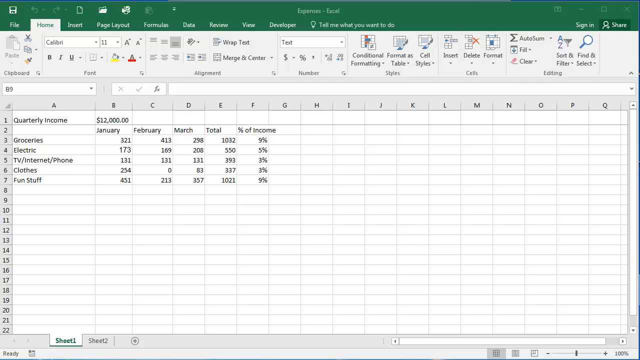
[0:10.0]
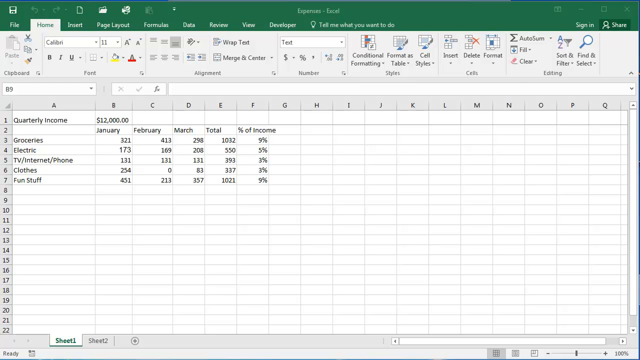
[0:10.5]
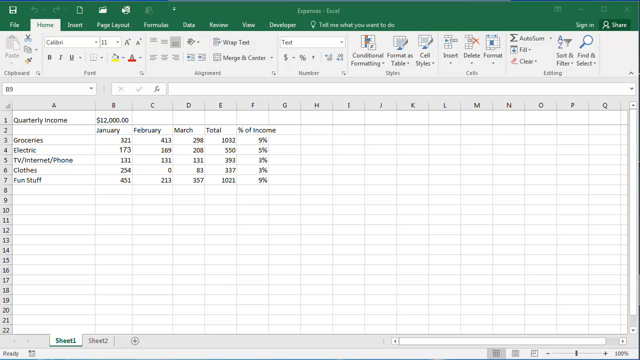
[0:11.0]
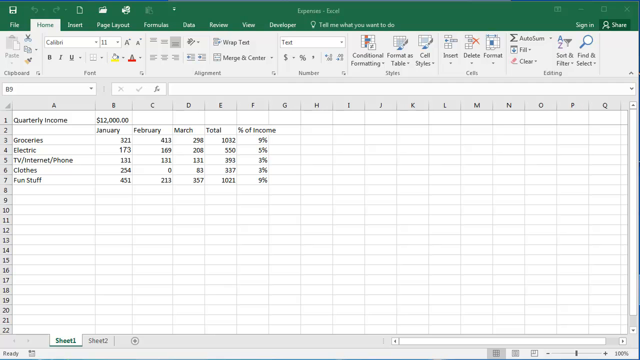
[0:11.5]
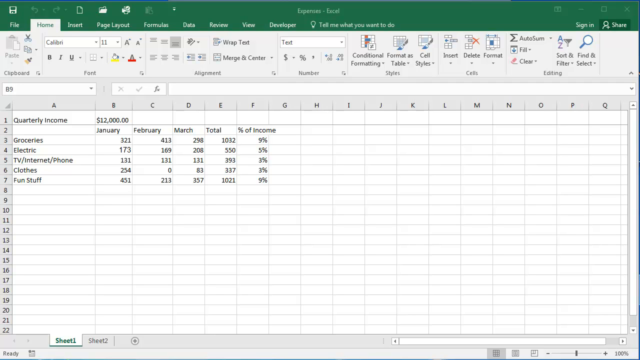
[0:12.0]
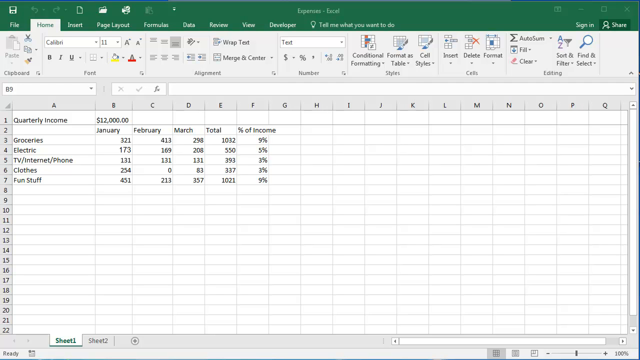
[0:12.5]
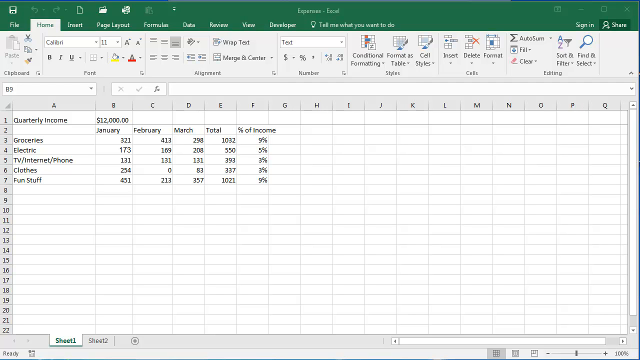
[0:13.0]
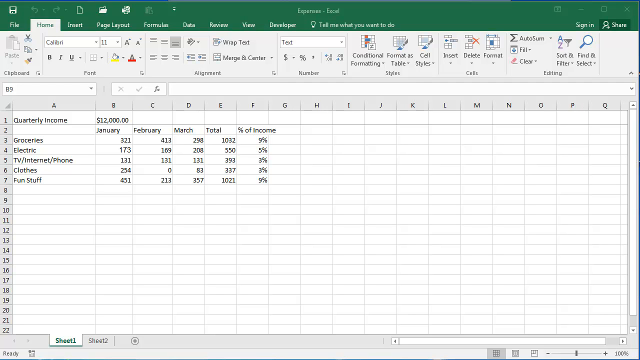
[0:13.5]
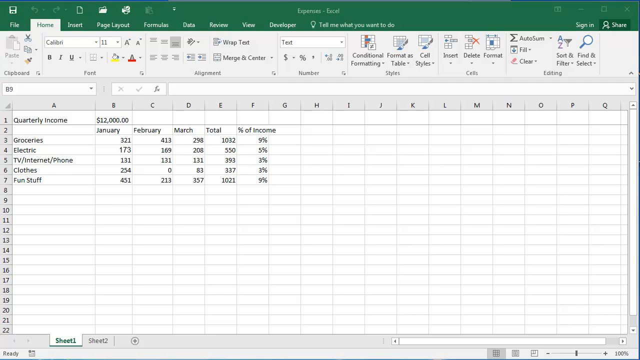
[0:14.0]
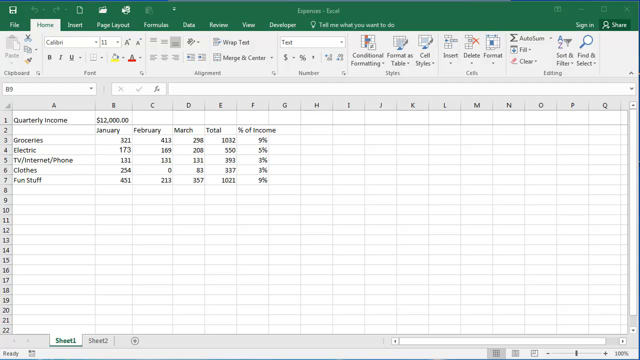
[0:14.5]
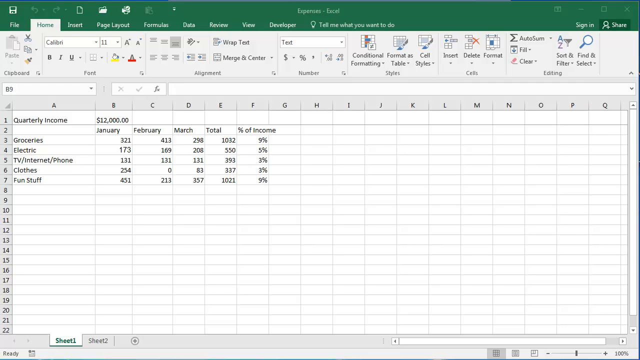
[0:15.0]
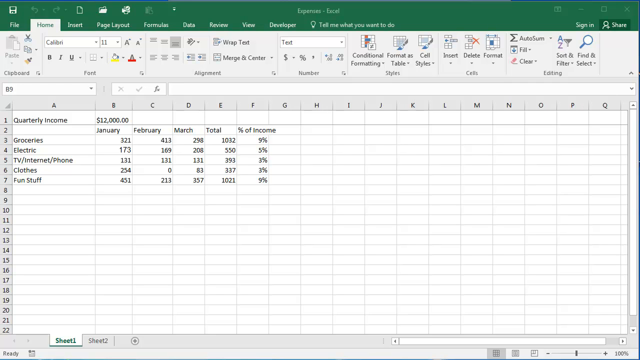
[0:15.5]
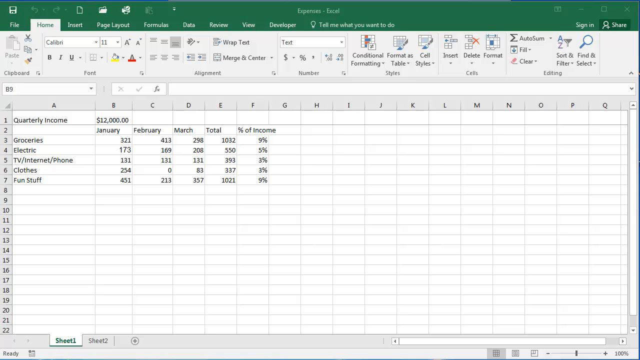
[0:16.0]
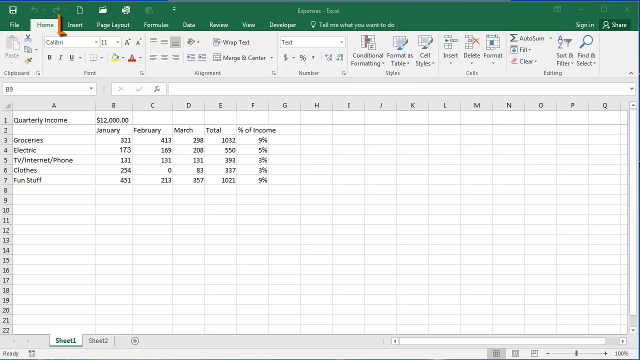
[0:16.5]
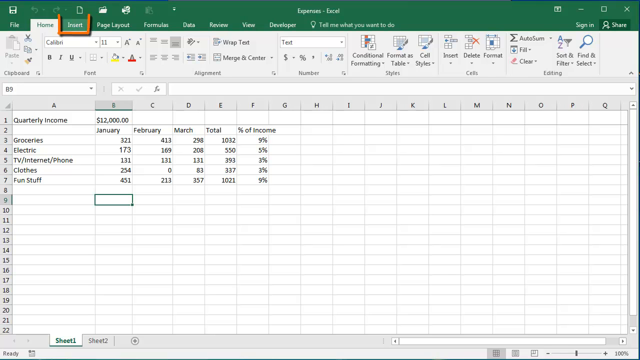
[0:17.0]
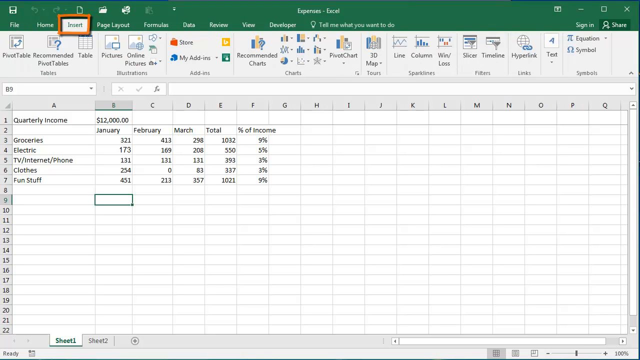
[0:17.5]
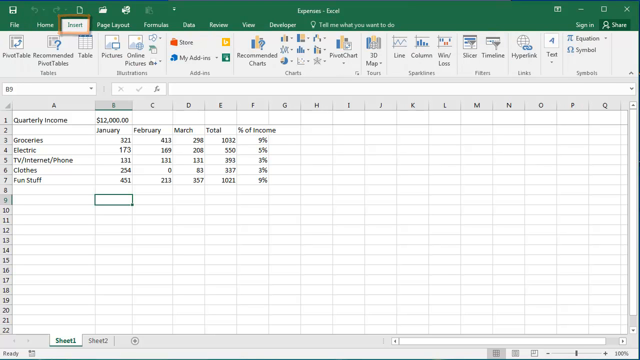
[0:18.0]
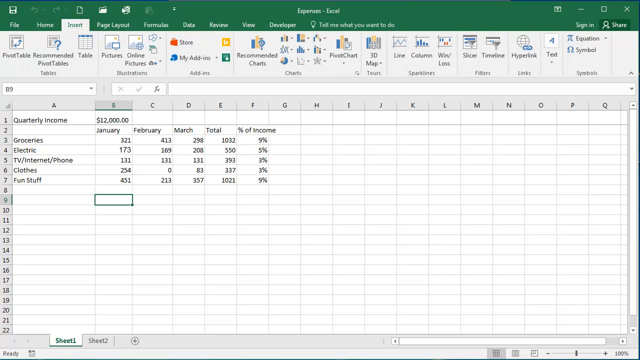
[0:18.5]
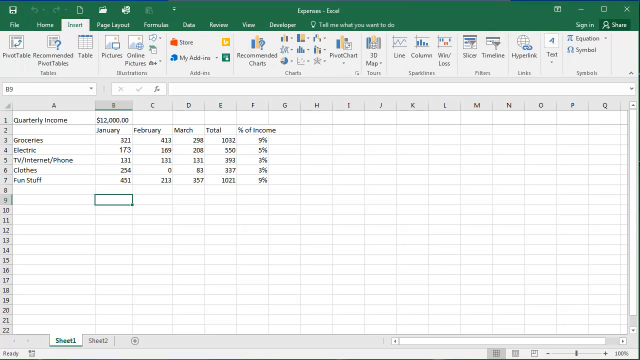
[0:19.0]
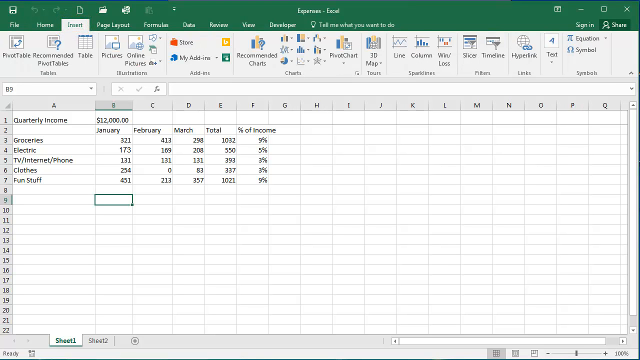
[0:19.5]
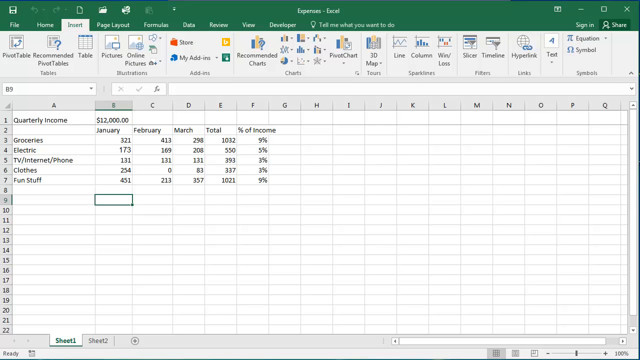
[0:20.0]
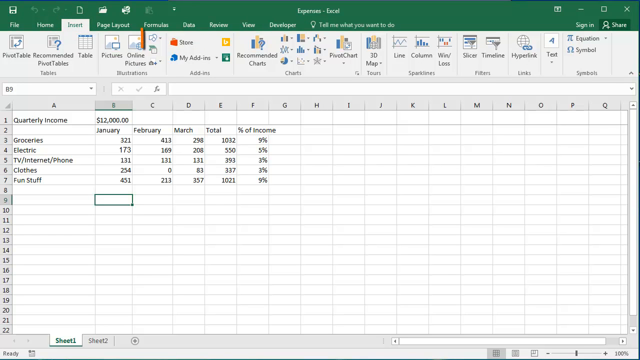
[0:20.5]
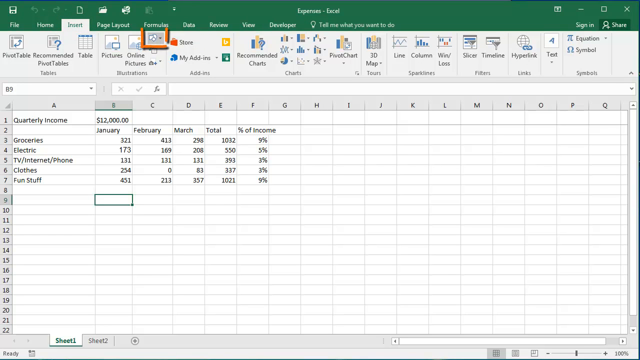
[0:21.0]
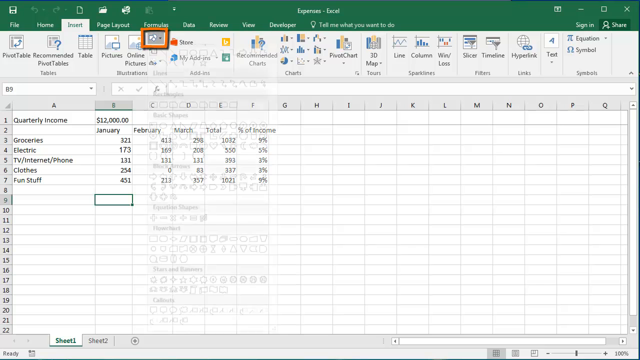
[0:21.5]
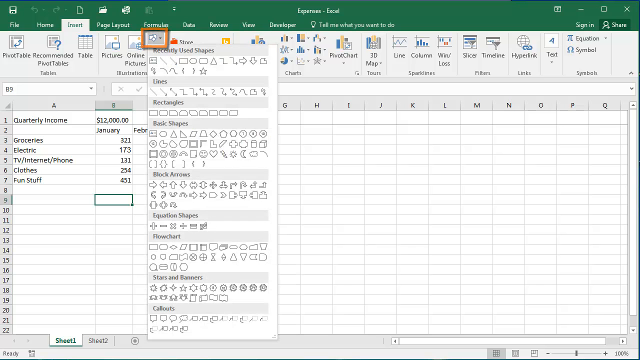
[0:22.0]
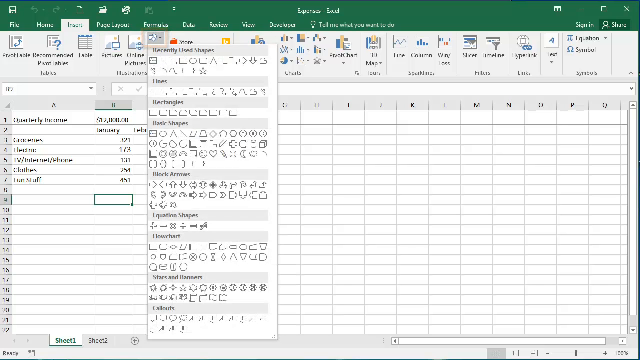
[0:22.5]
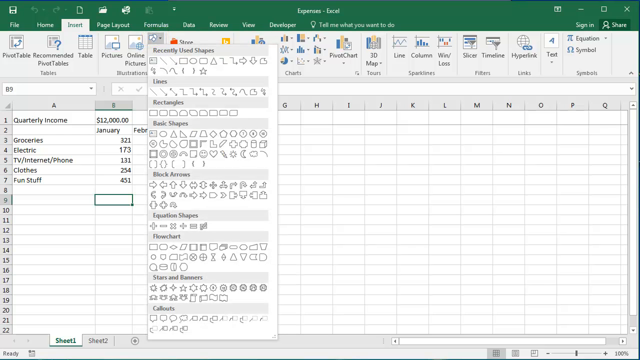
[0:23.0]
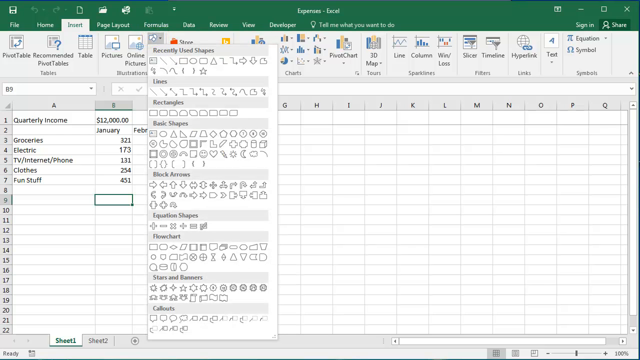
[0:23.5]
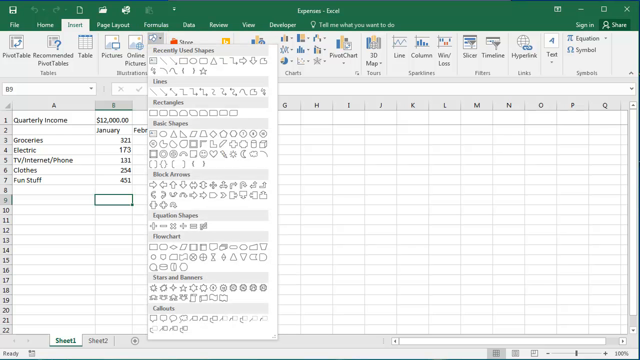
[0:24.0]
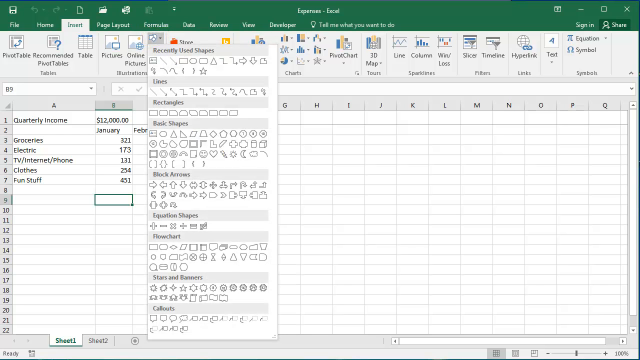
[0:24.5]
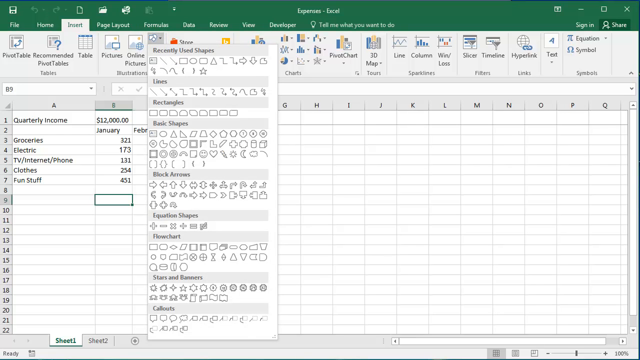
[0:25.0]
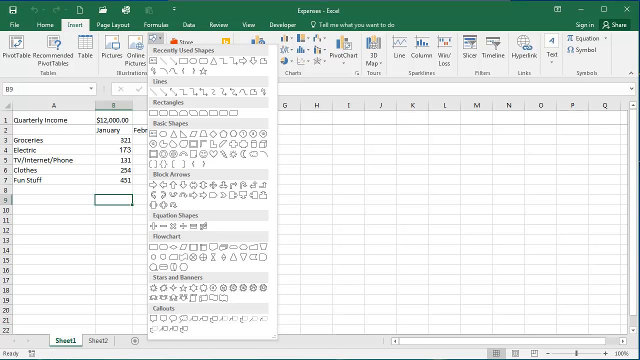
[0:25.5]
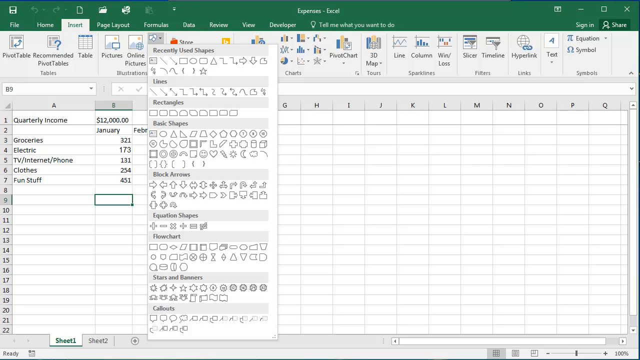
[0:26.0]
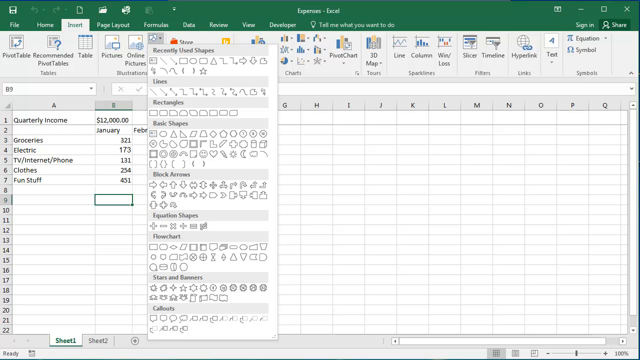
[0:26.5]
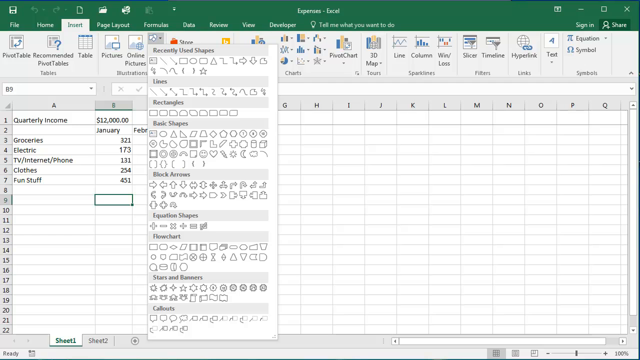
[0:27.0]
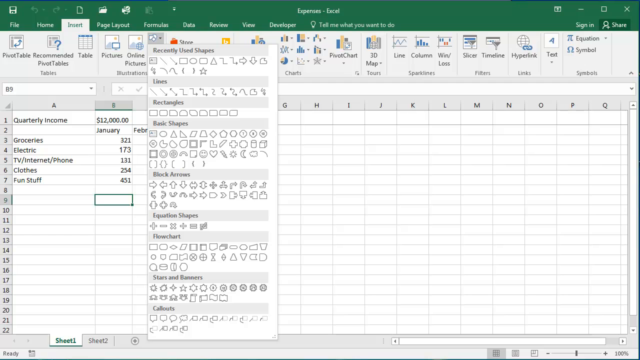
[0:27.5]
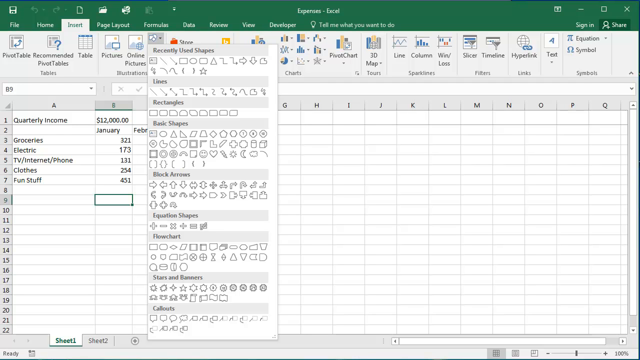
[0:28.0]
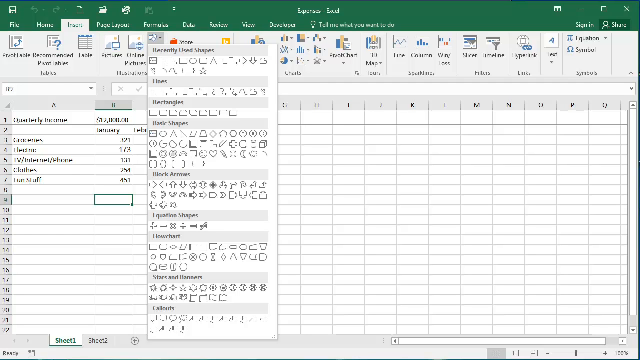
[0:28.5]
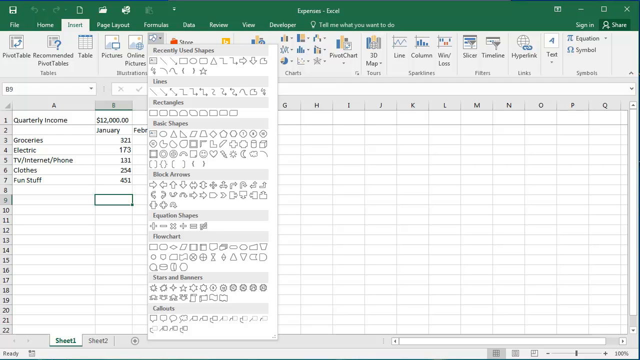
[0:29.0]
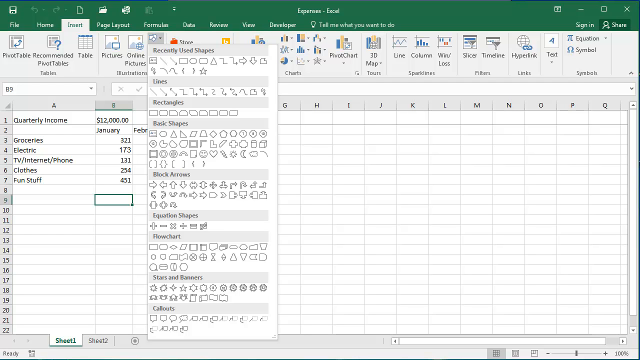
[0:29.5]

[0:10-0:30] An Excel spreadsheet has a green bar across the top with the menu items File, Home, Insert, Page Layout, Formula, Data, Review, View, Developer and Tell Me What You Want to Do. The Home tab is highlighted. Columns A through F are filled in. Column A has "quarterly income" in row 1, then "groceries" in row 3, "electric" in row 4, "TV, Internet, and phone" in row 5, "clothes" in row 6 and "fun stuff" in row 7. Column B shows 12,000, then "January" in row 2, followed by 321, 173, 131, 254 and 451. The next column has "February," 413, 169, 131, 0 and 213, and the one after it "March," 298, 208, 131, 83 and 357. Column E has "total" with 1032, 550, 393, 337 and 1021, and column F has "percent of income" with 9, 5, 3, 3 and 9. The view stays on the spreadsheet for a while, showing all the numbers. Then a red rectangle goes around the Insert tab in the menu bar at the top, and a black bar appears in column B, row 9 of the spreadsheet. A red bar then appears over the drop-down menu for formula, and its menus appear. A gigantic rectangle full of many different shapes appears on the screen, with sections for recently used shapes, lines, rectangles, basic shapes and more.